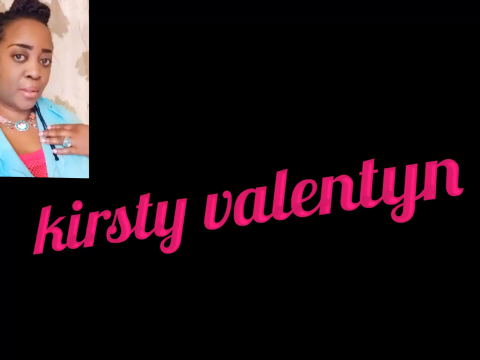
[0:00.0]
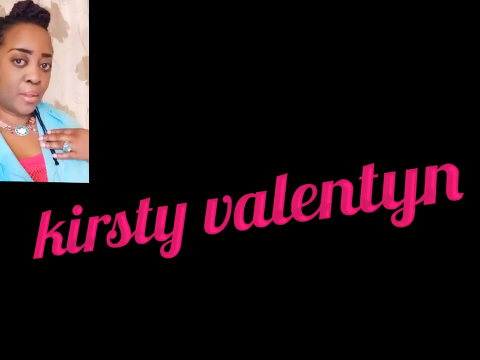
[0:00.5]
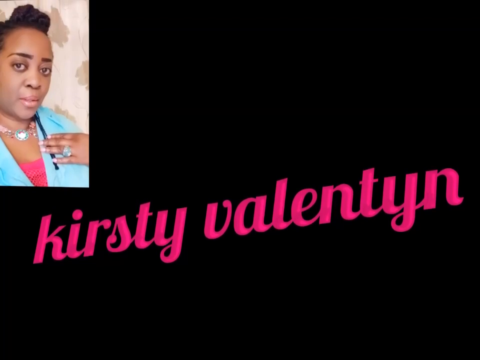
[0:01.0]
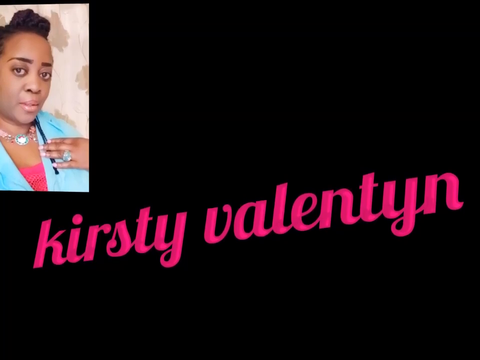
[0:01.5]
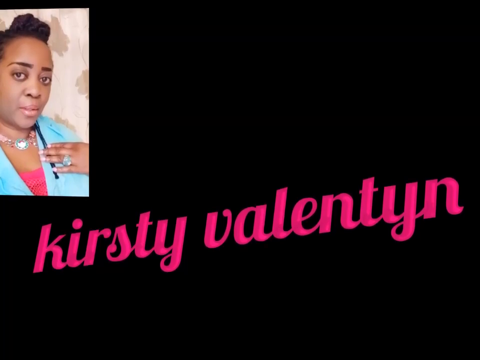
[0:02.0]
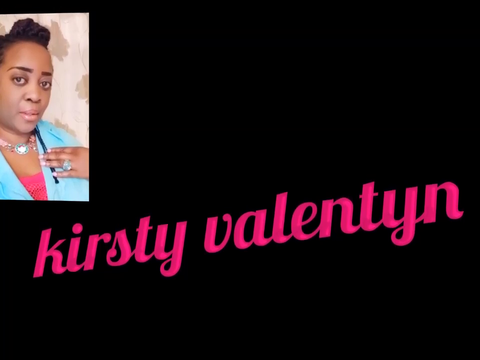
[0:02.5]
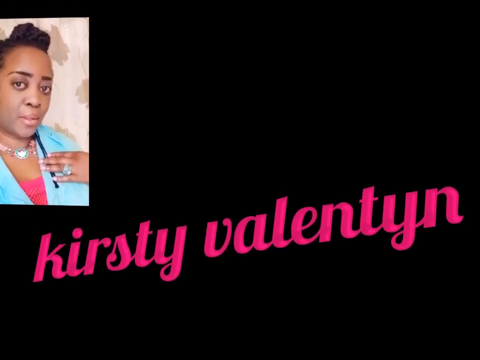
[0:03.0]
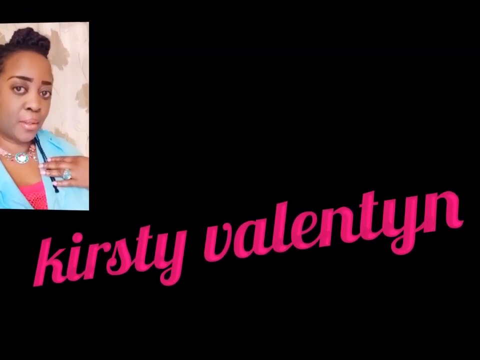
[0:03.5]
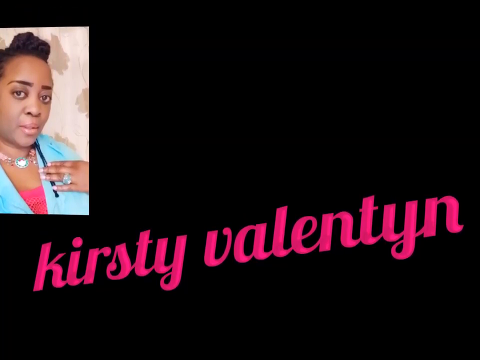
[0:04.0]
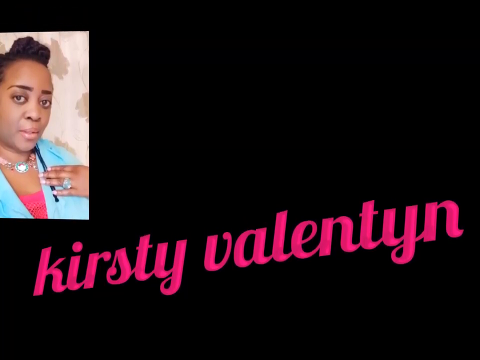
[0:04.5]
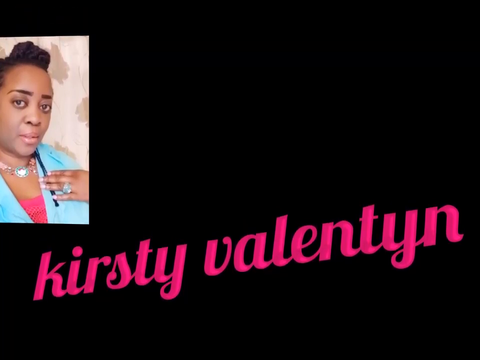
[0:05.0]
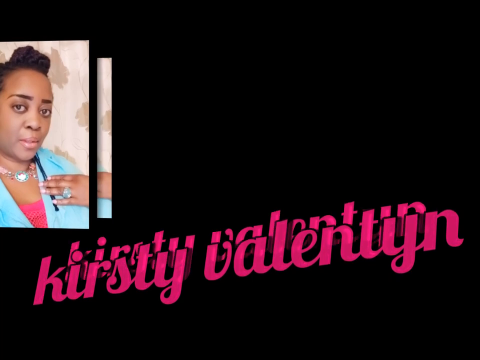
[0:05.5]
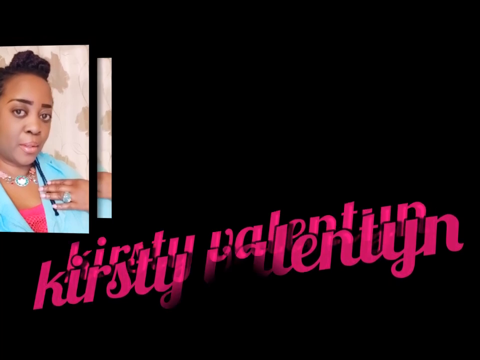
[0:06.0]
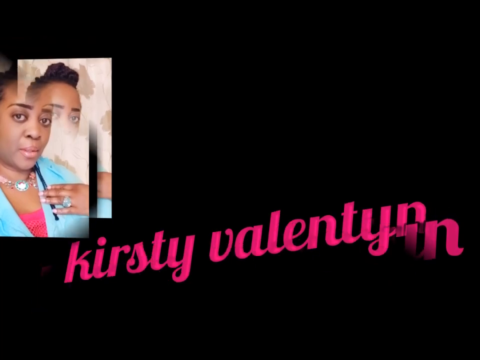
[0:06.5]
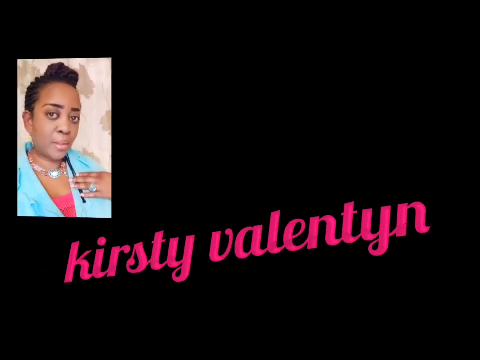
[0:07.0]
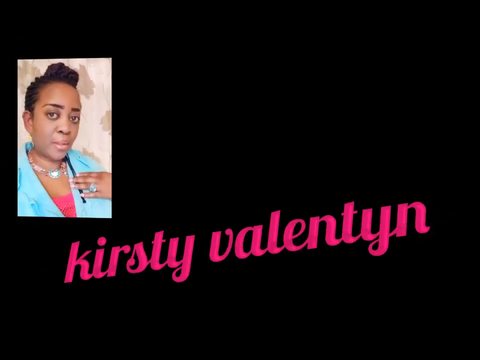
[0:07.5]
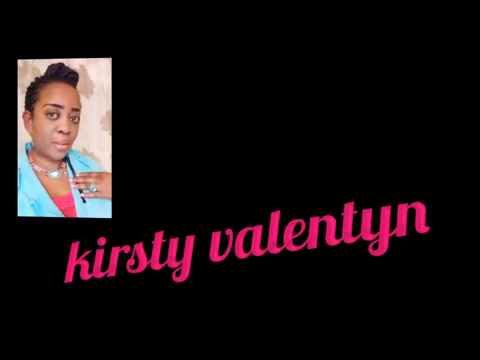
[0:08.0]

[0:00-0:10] A Black woman with big eyes wears a blue dress with pink innerwear at the top, bracelets, and a ring on her hand. Behind her is a curtain design. The video changes from one scene to another, and she seems to be giving an advert about Valentine. The text "Christy Valentine" is written in pink.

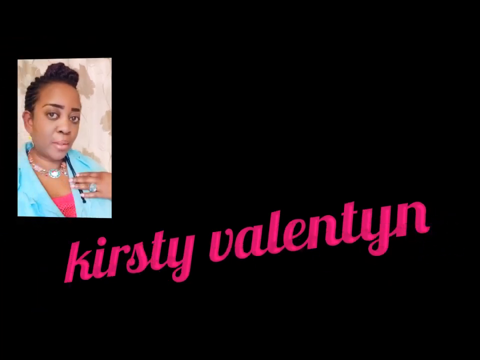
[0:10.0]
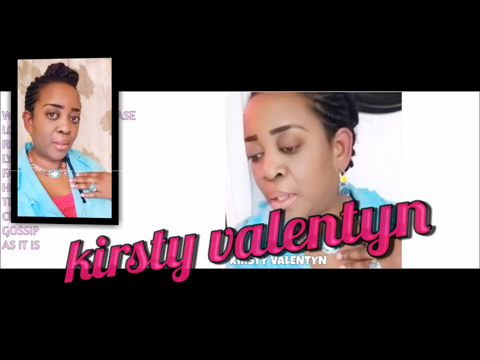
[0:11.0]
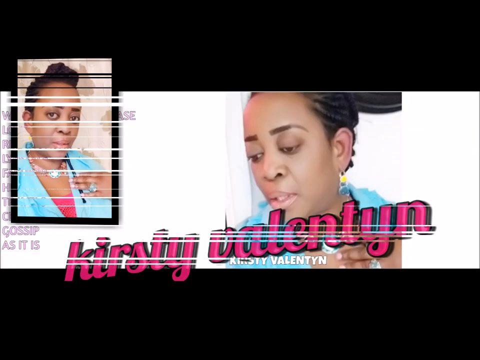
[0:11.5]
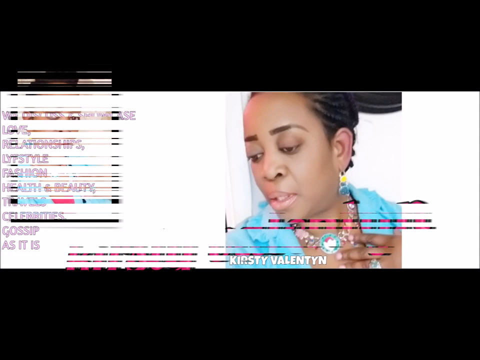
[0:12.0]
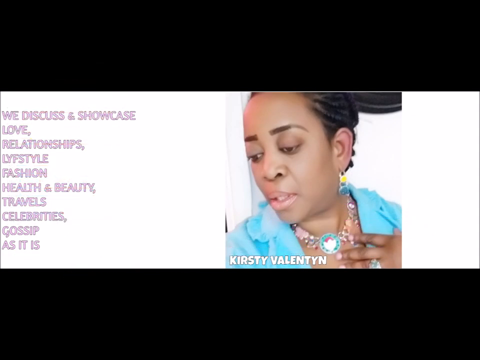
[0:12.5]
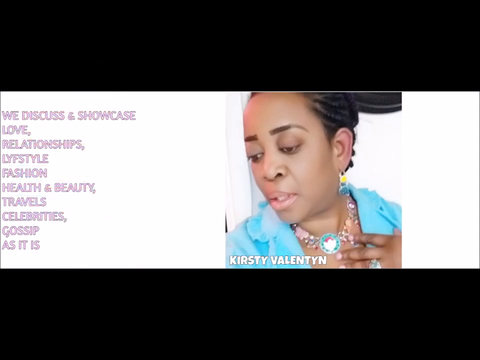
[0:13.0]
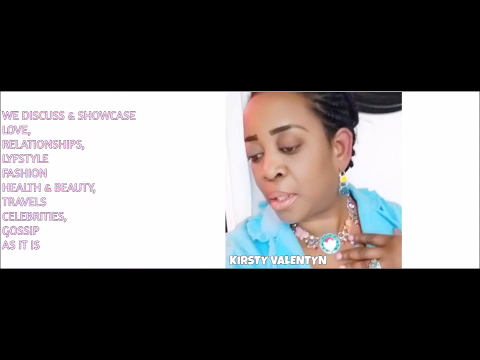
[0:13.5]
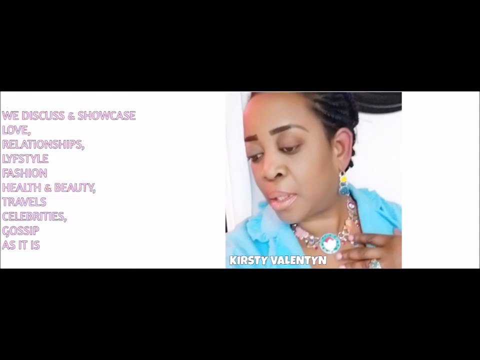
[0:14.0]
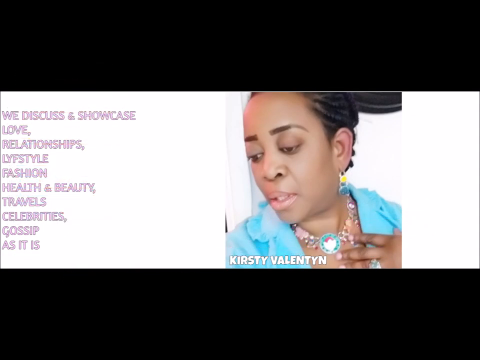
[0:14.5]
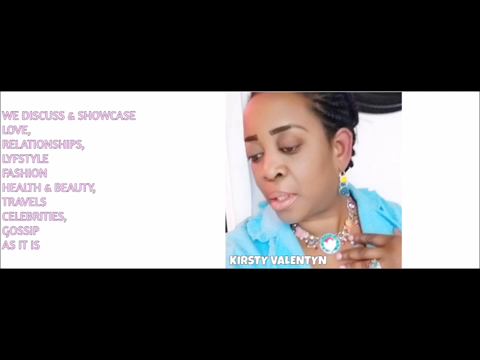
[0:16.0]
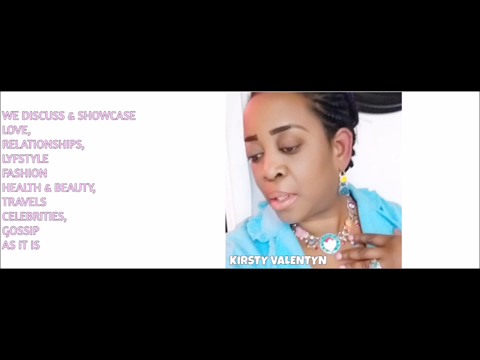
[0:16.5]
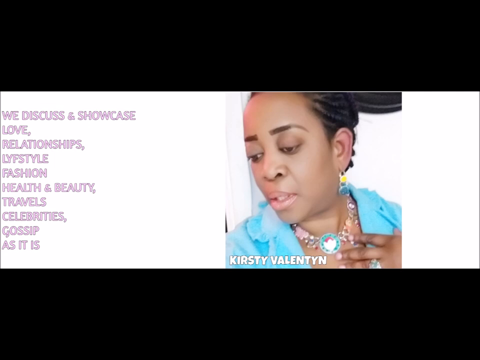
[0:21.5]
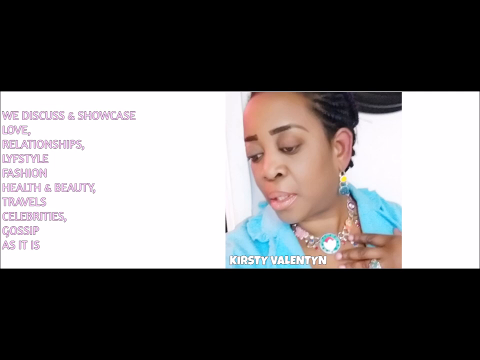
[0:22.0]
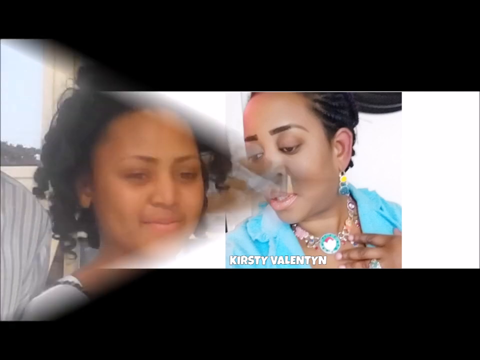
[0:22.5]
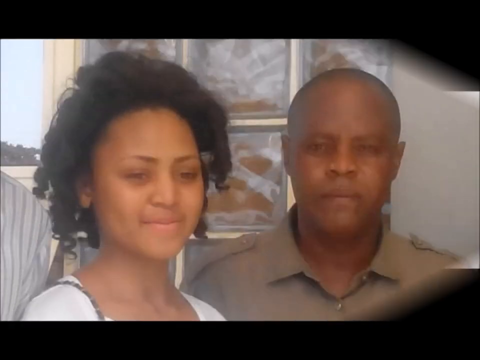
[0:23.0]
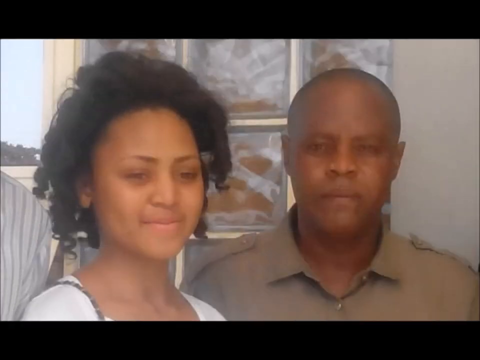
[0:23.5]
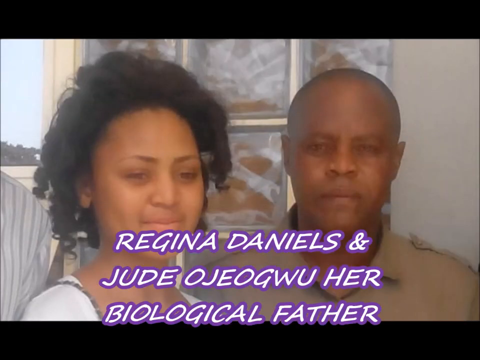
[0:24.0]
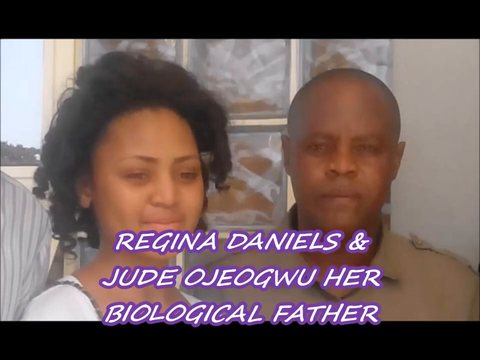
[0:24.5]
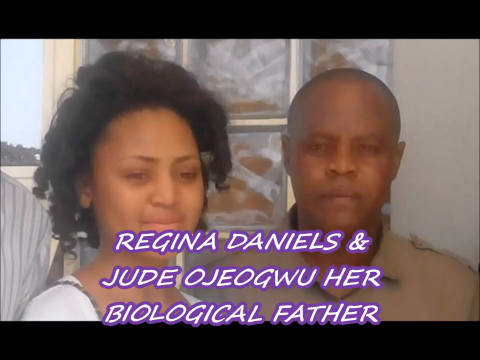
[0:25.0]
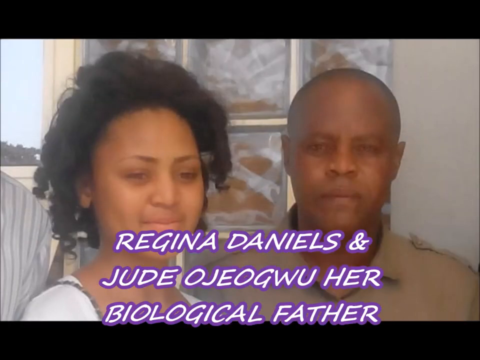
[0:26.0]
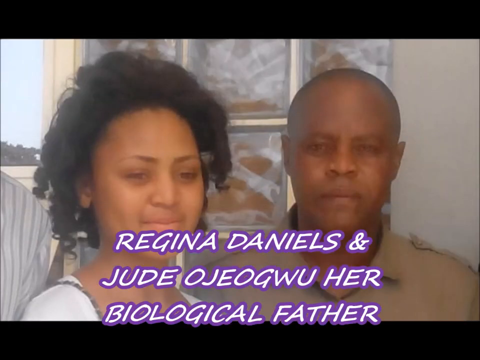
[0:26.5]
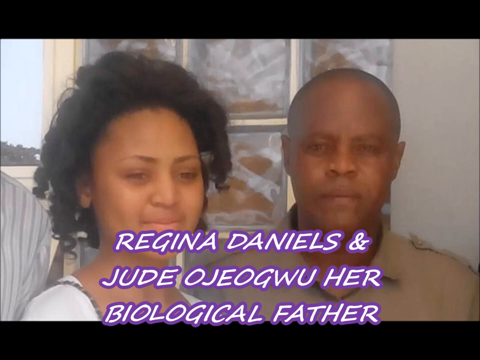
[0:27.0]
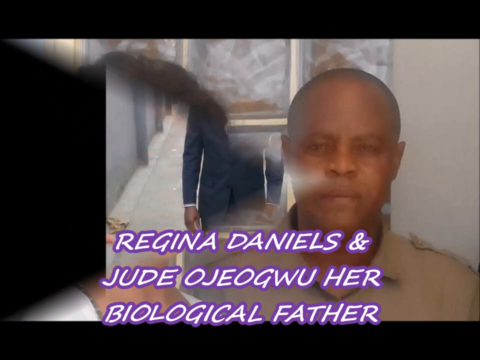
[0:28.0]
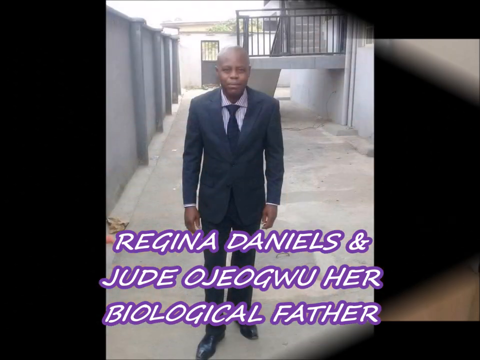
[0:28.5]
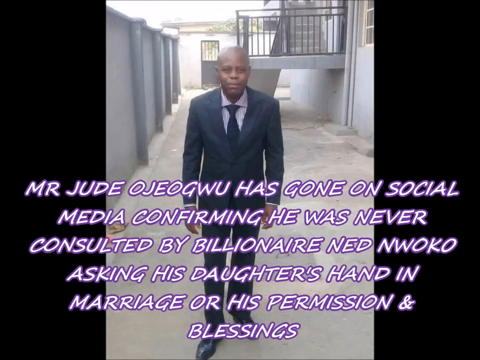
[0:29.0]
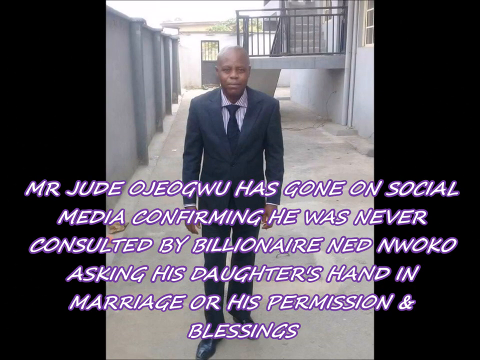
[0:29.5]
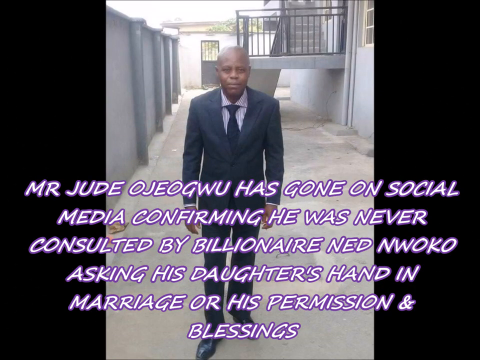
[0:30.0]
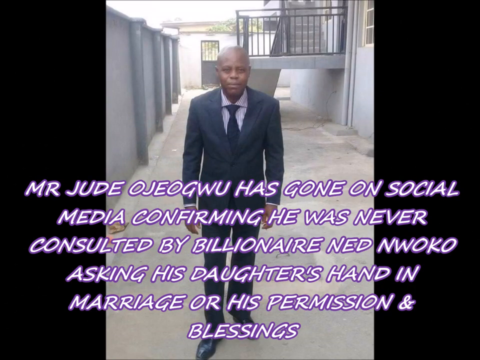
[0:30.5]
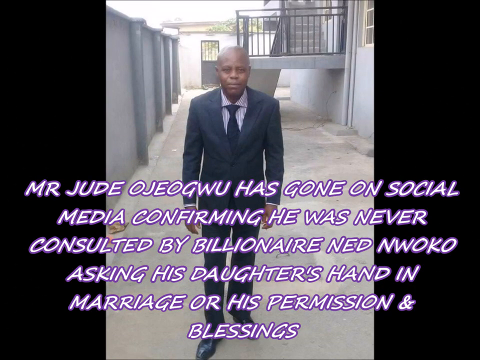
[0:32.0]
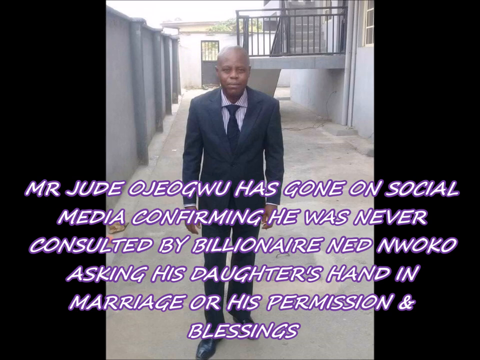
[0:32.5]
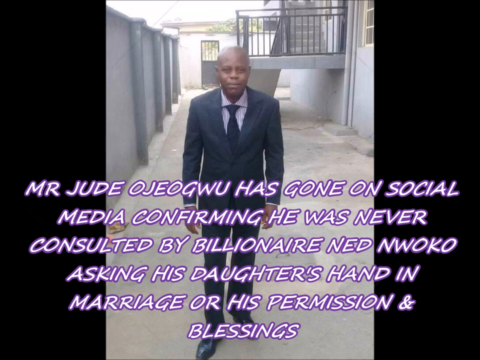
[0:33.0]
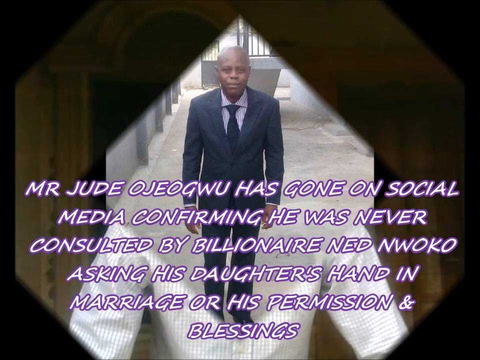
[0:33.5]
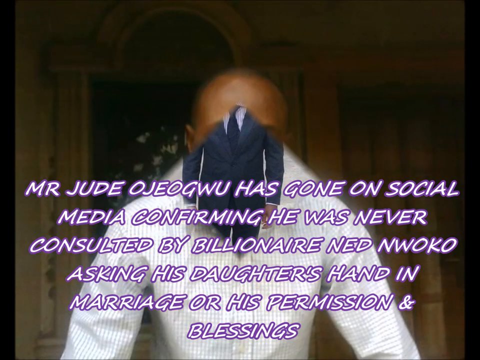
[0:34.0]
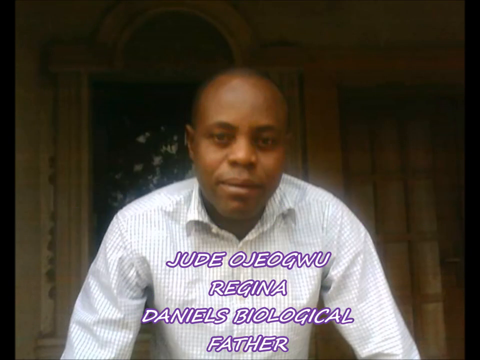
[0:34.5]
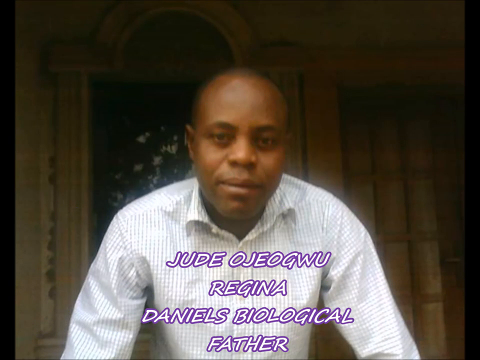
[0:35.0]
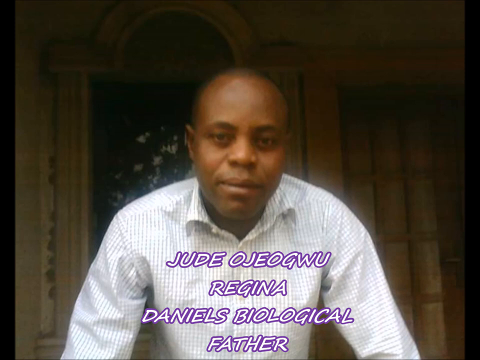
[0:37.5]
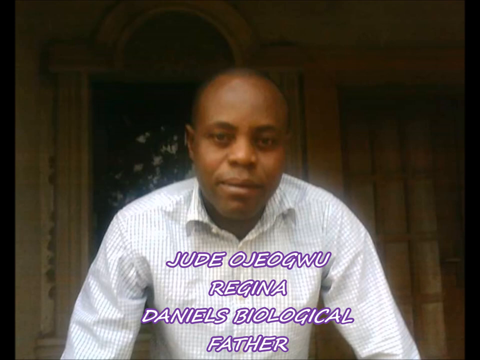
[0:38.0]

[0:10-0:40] The presenter, Christy Valentine, appears wearing a blue top, and on-screen text reads "we discuss and showcase love relationship lifestyle fashion health and beauty travels celebrities gossips as it is". Next comes a picture of a fair lady wearing a dark wig standing beside a man in a brown shirt; they are named as Regina Daniels and Jude Ochioku, her biological father. After that, a picture shows Mr. Jude, Regina Daniels' assumed dad, wearing a suit and standing in his compound, with text reading "Mr Jude Ochioku has gone on social media confirming he was never consulted by billionaire" followed by a mention of asking for his daughter's hand in marriage, his permission and blessings.